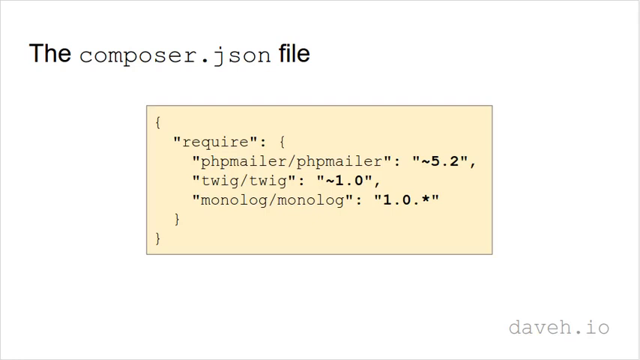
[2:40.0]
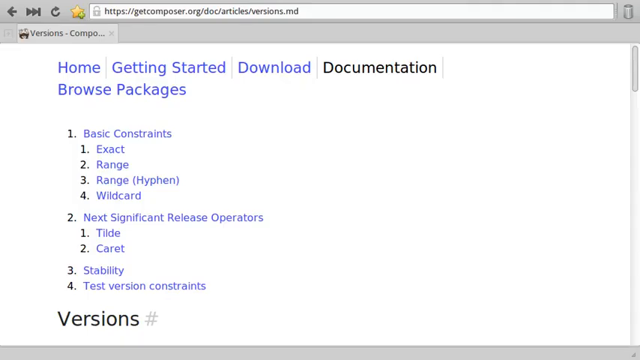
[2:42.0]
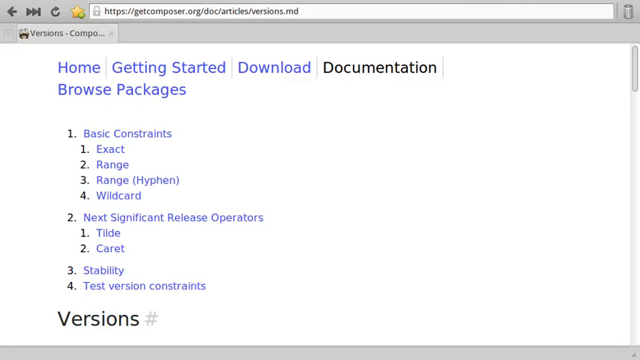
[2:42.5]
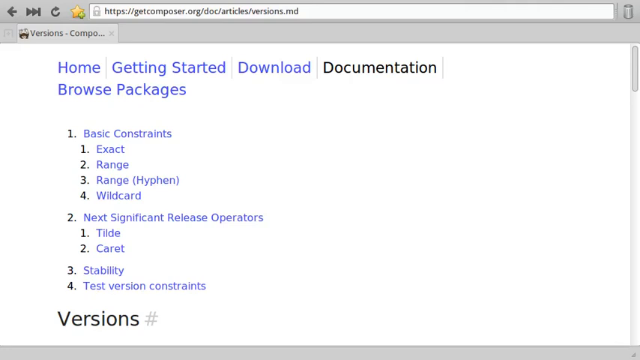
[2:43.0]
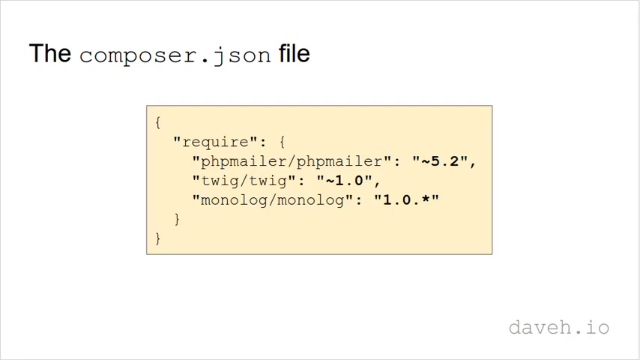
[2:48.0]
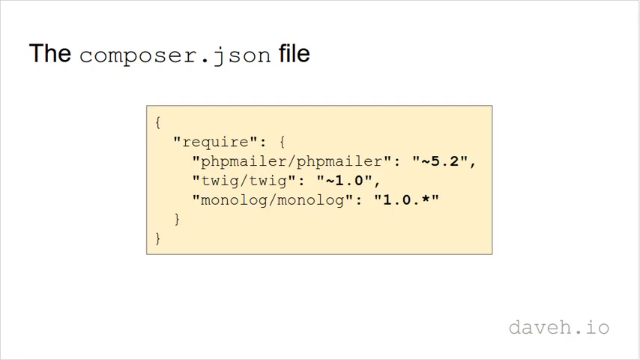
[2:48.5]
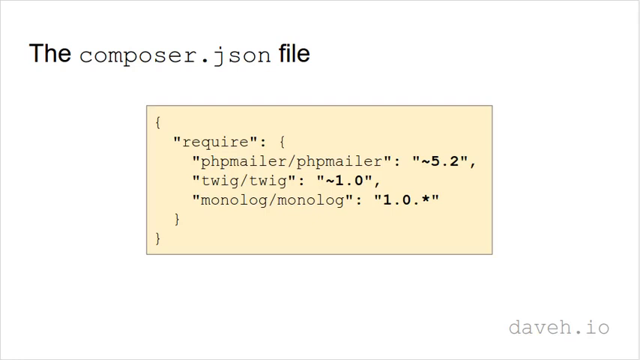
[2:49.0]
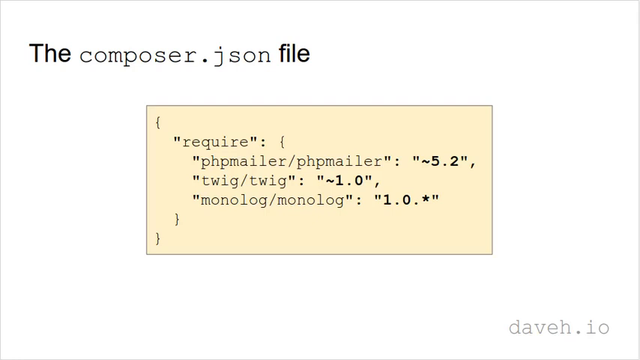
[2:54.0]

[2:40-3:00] The screen shows a bit of coding under "the composer.json file": "require phpmailer/phpmailer twig/twig monologue/monologue", followed by some numbers. The view changes to "https://getcomposer.org/doc/articles/versions.md", with a menu reading "home getting started download documentation browse packages"; "documentation" is in black, apparently selected. Underneath is a list reading "1 basic constraints 1 exact 2 range 3 range hyphen 4 wildcard 2 next significant release operators 1 tilde 2 caret 3 stability", followed by test version constraints, and different versions at the bottom. It then goes back to the screen with the yellow rectangular popup reading "require" with phpmailer, twig/ and monologue.